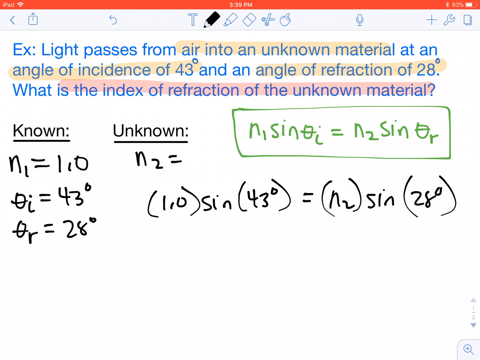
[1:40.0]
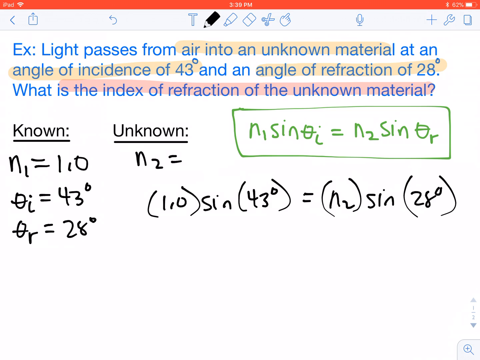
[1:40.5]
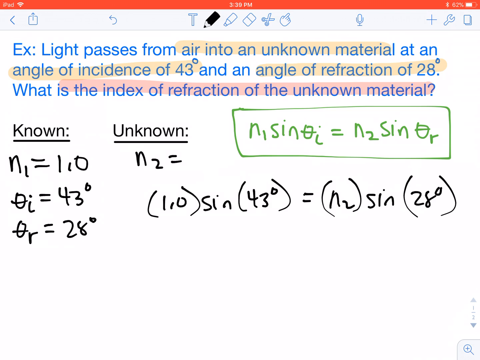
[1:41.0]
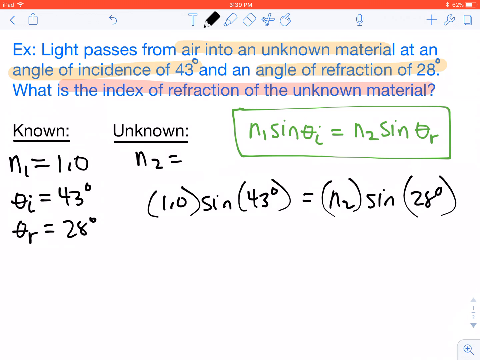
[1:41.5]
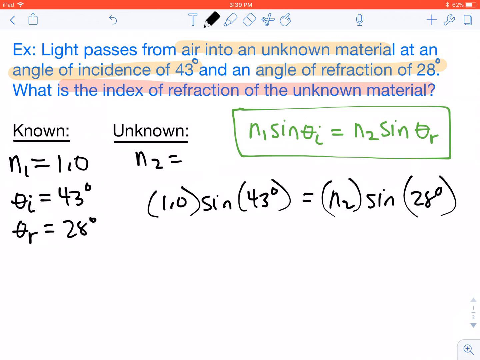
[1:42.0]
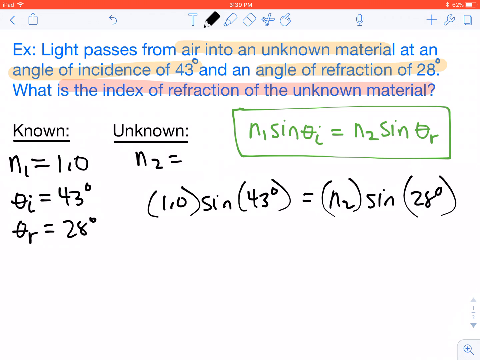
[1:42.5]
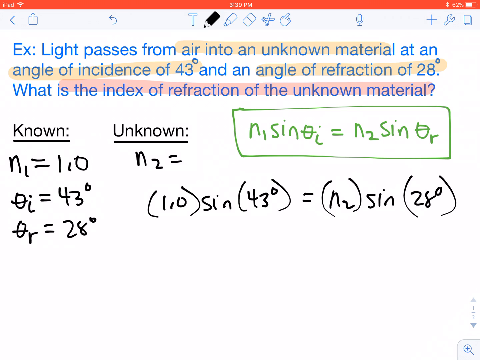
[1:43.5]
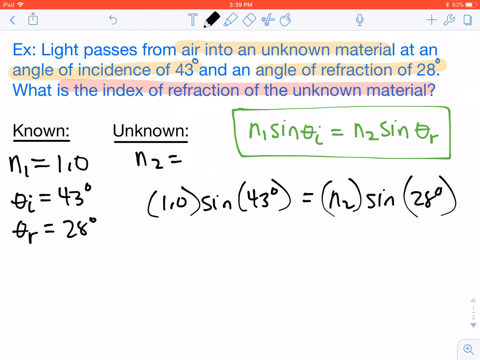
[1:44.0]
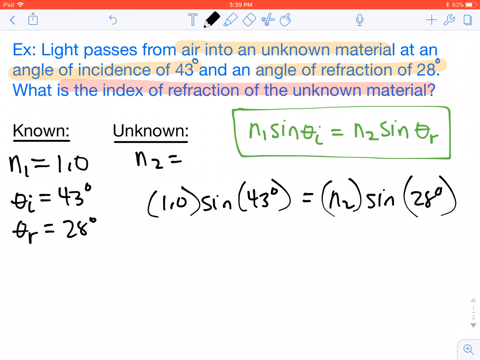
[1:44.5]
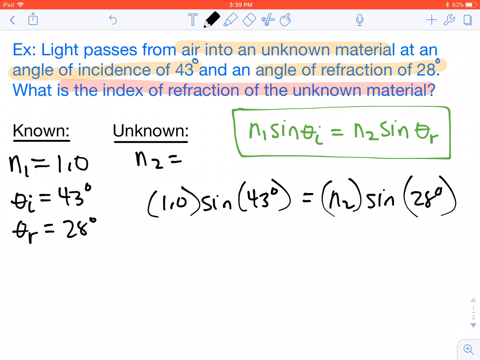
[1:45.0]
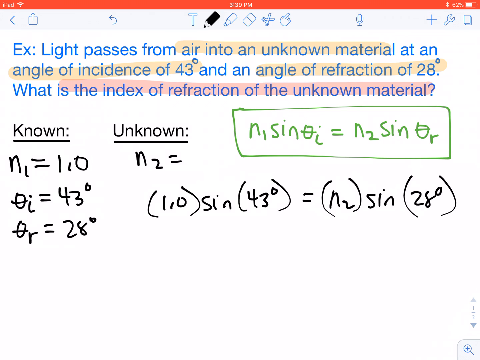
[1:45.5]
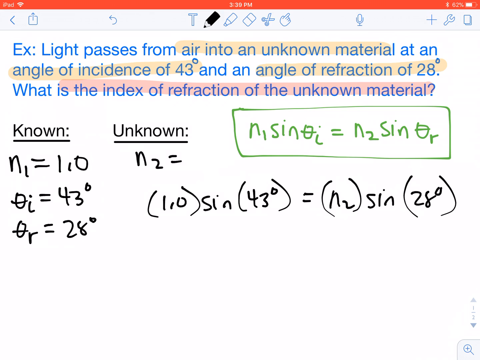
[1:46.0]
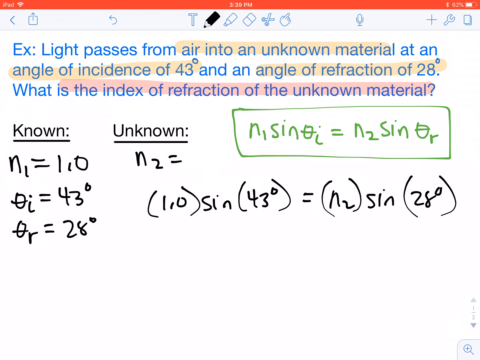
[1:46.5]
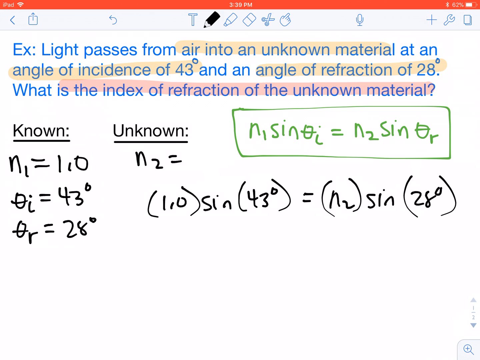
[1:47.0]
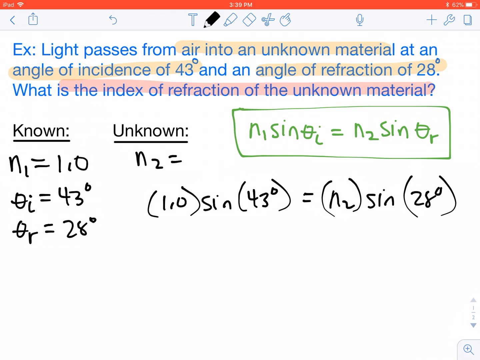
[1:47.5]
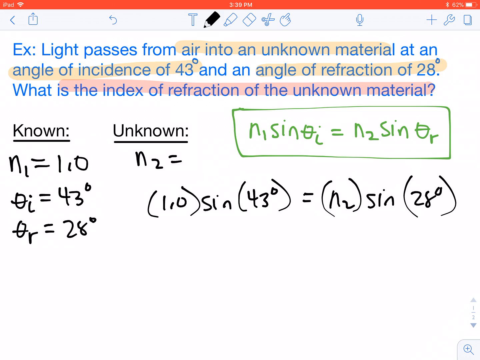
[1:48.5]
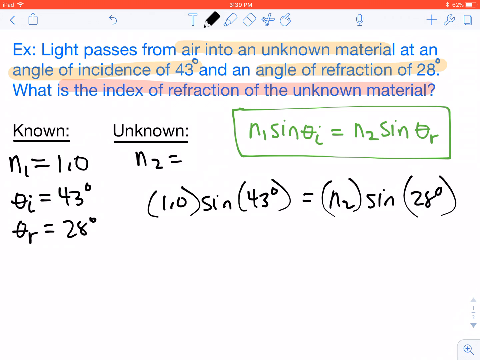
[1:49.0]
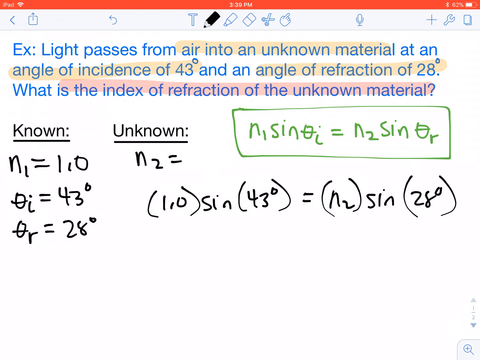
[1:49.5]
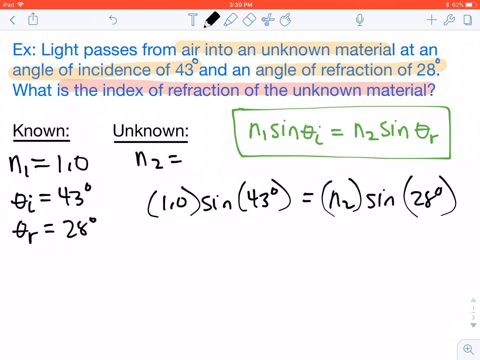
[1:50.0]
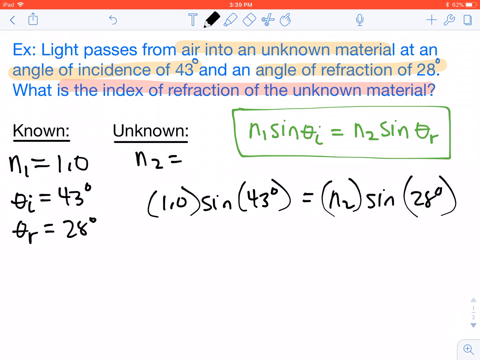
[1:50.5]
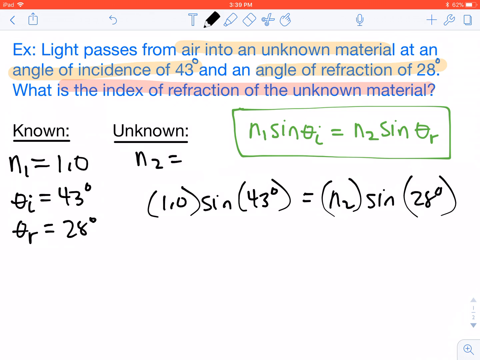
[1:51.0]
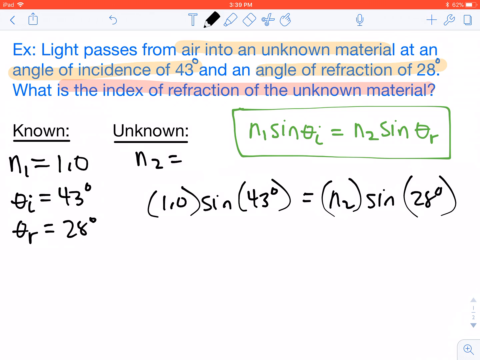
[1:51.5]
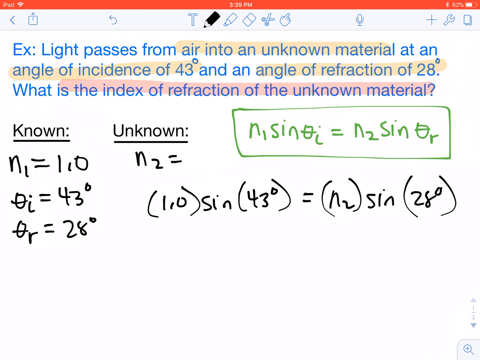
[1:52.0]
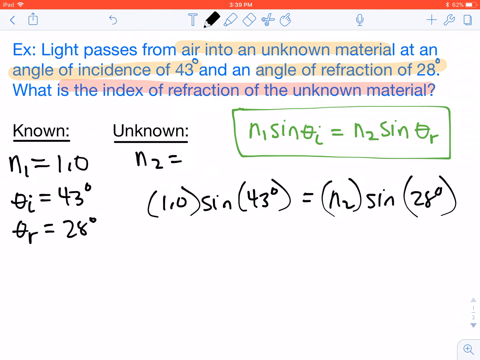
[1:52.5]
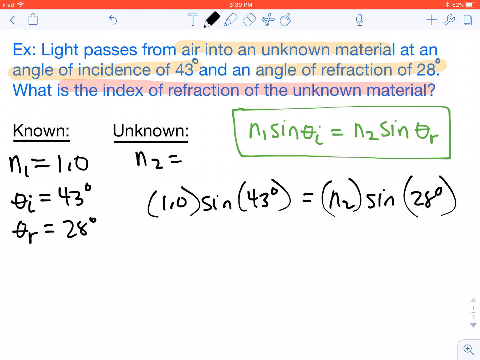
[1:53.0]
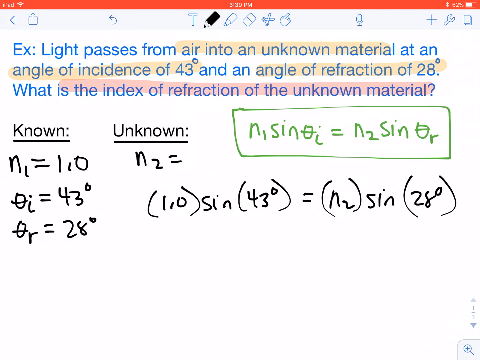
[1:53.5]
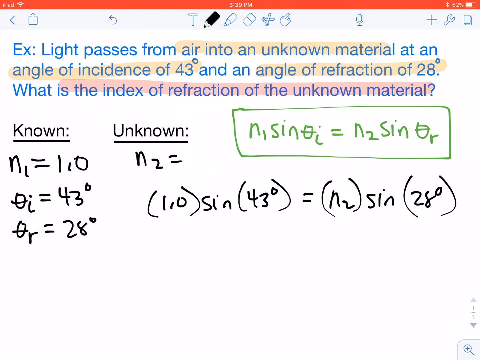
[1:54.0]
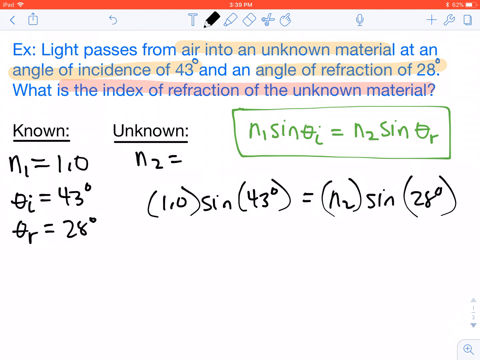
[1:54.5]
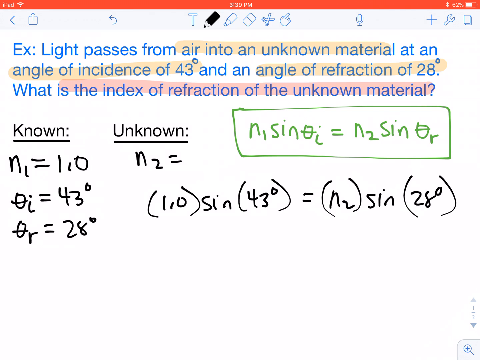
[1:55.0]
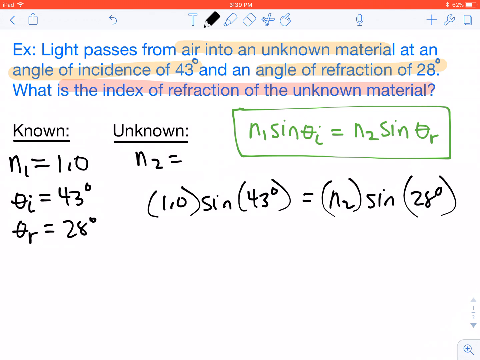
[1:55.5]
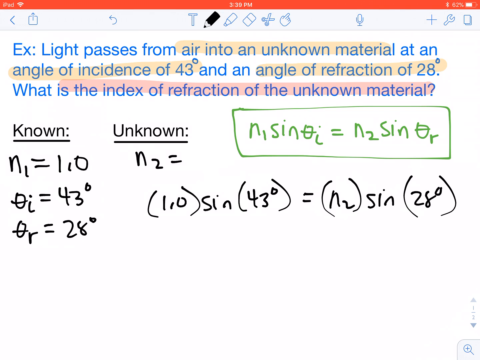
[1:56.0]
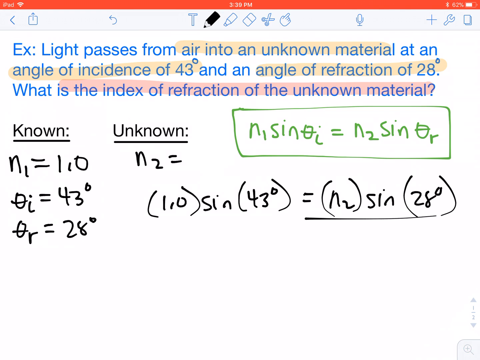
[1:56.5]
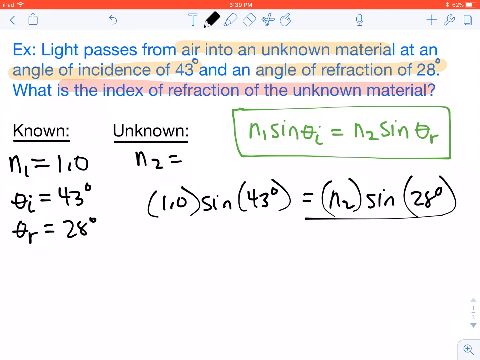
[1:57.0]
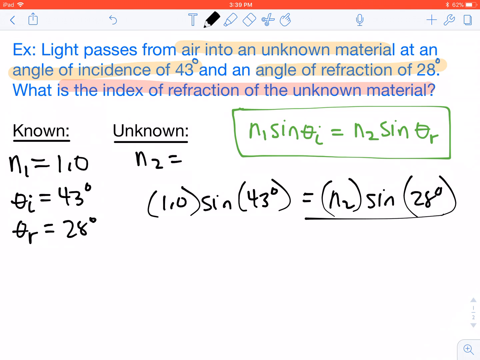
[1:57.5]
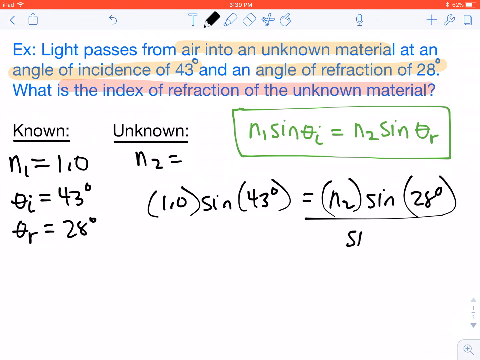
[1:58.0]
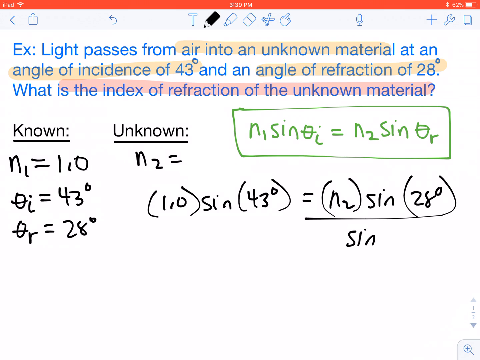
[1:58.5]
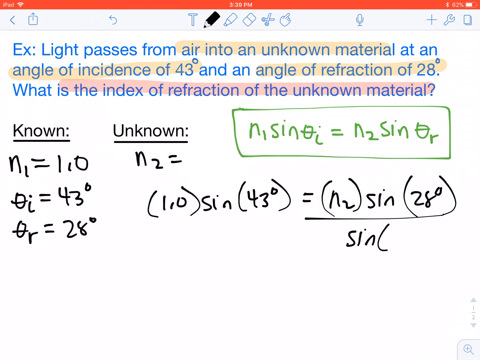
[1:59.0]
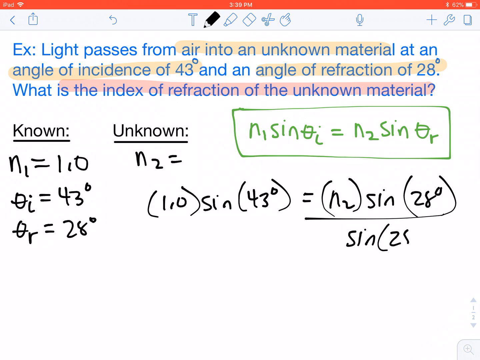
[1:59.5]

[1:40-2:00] For most of the shot the person does not write anything. In the last few seconds they underline the second part of the equation, "= (n2) sin (28 degrees)", drawing a line under it as if dividing, and it looks like they are dividing it by "sin (28 degrees)". The top of the window is a kind of red-orange colour, and the time shown at the top appears to read 3:39 p.m.